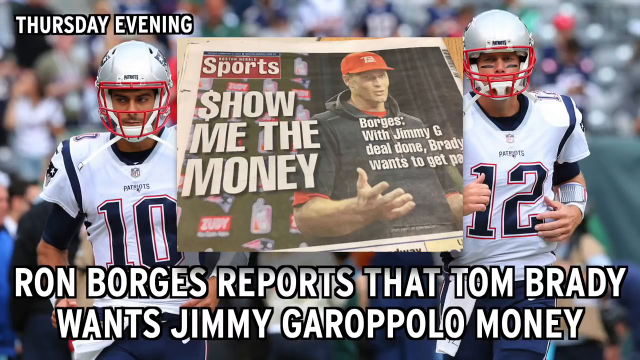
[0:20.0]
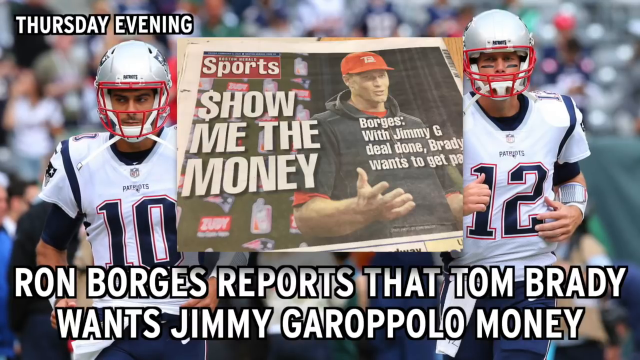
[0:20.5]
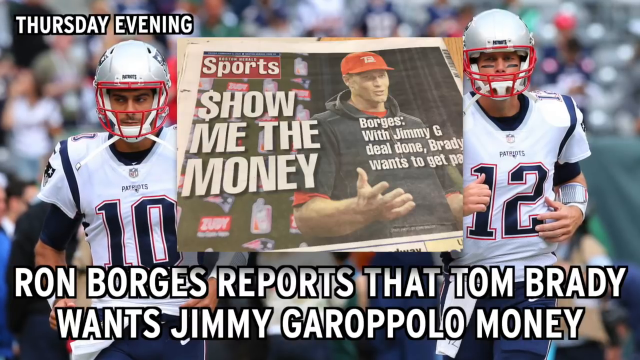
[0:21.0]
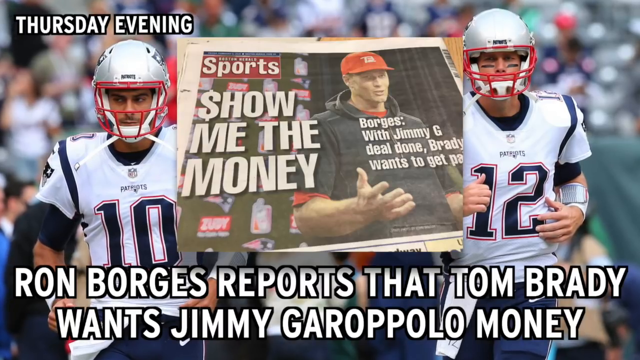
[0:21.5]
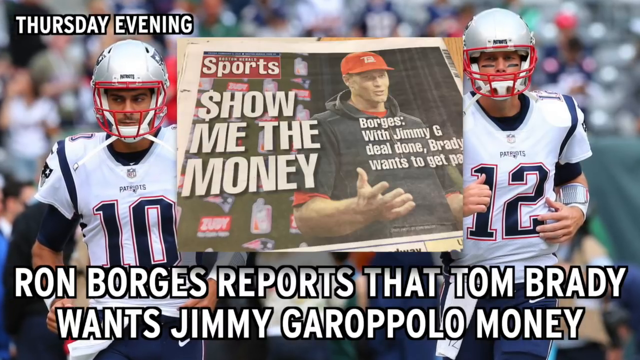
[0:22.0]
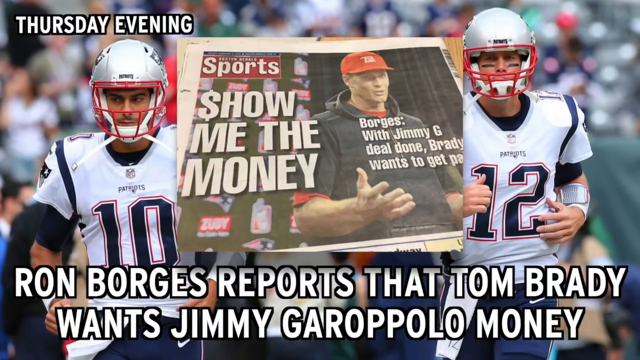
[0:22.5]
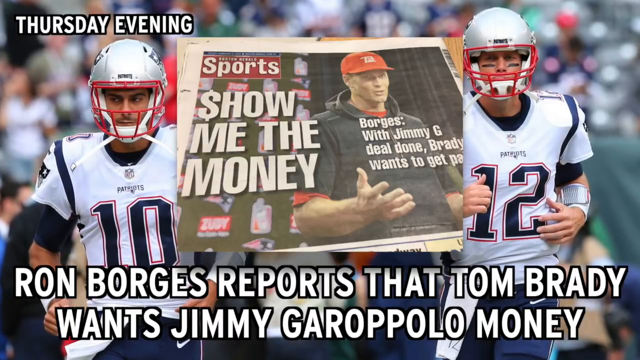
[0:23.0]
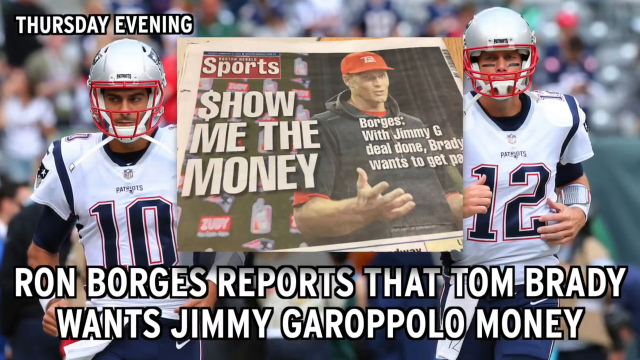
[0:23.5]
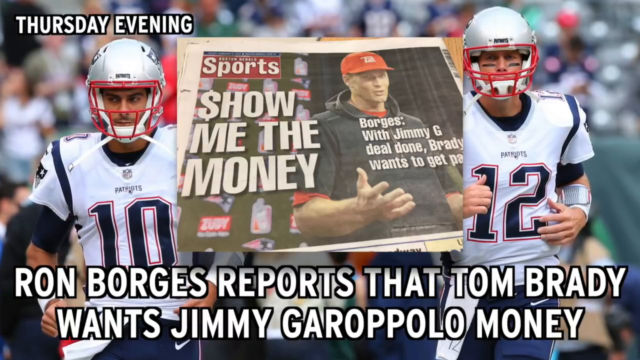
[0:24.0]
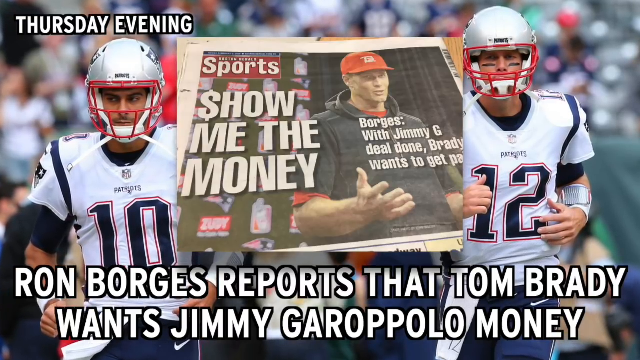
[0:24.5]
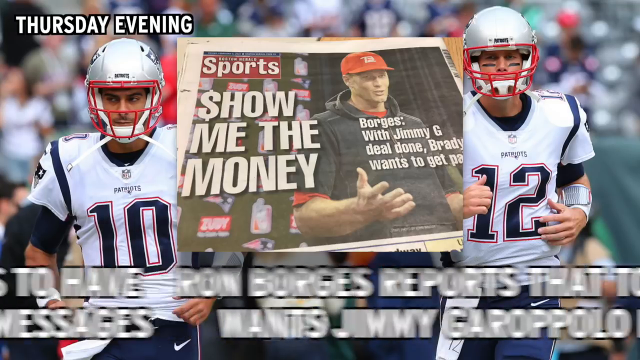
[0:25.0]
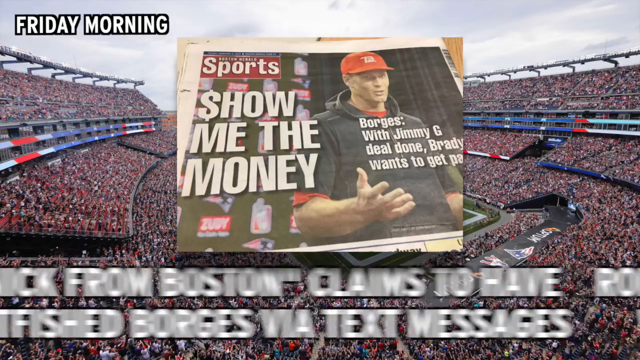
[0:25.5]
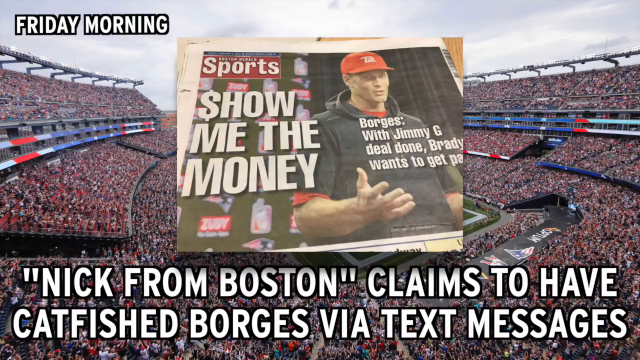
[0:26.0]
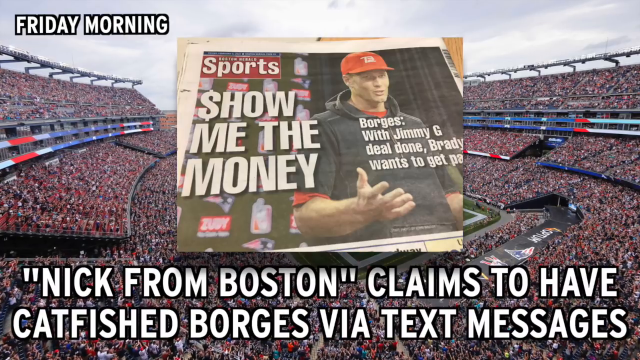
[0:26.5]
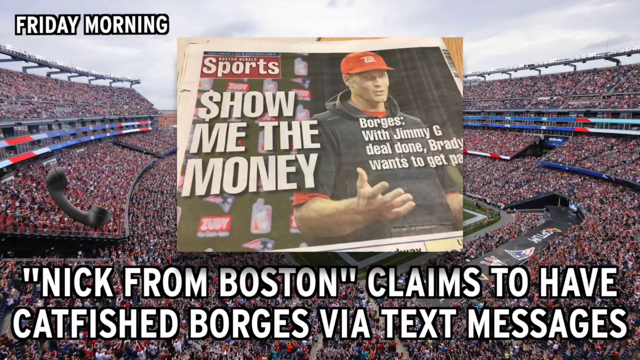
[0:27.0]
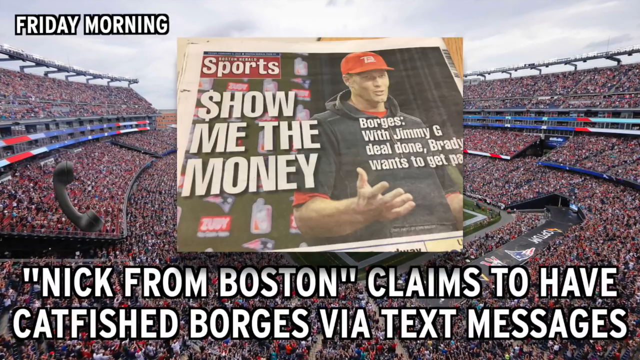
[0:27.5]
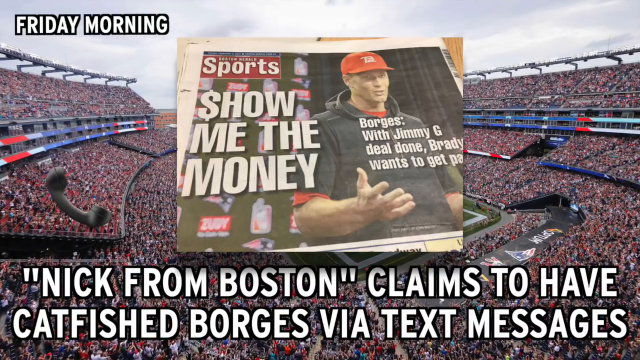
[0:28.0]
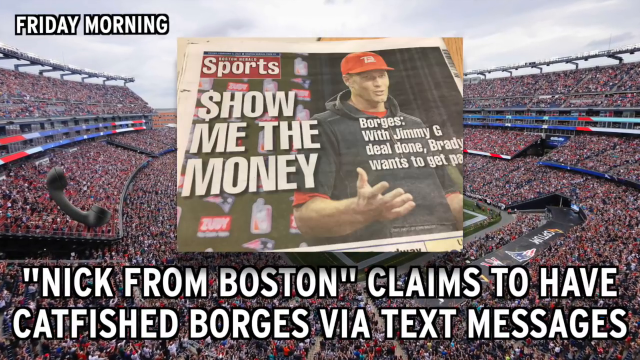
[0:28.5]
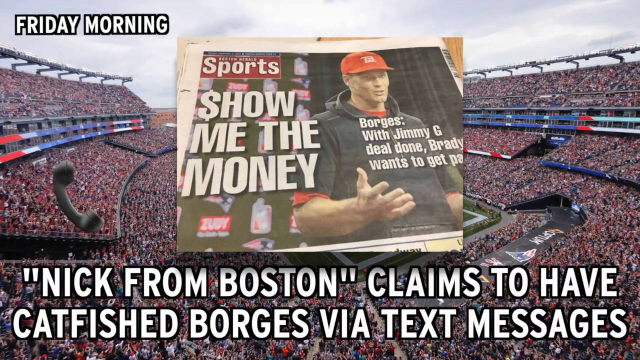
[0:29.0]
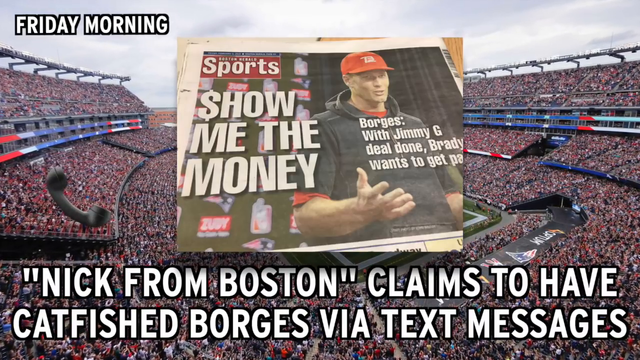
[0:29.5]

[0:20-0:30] The camera continues to zoom in on the two men. The white text at the bottom of the screen changes to read "'Nick from Boston' claims to have catfished Borges via text messages". The scene transitions to a fully packed stadium with people overflowing in the bleachers, while the newspaper with its headline is still shown in the center of the screen. The camera zooms in. A phone icon appears in the middle left and begins to rock back and forth.